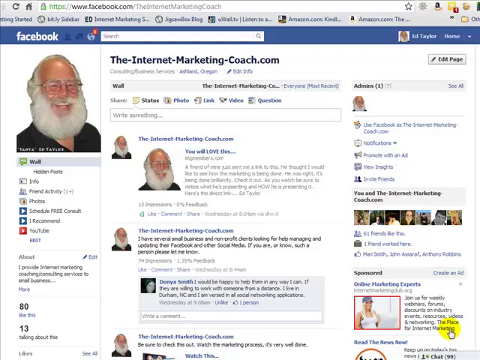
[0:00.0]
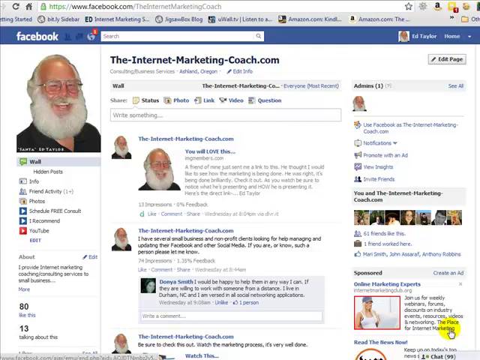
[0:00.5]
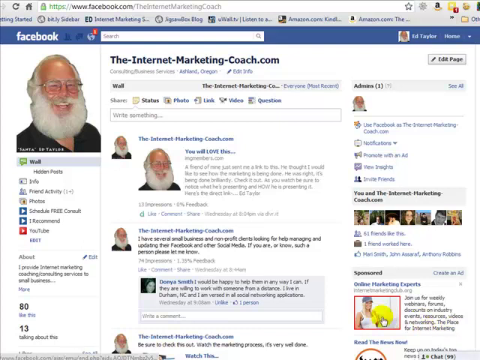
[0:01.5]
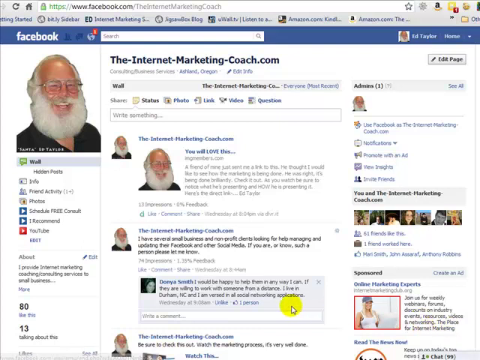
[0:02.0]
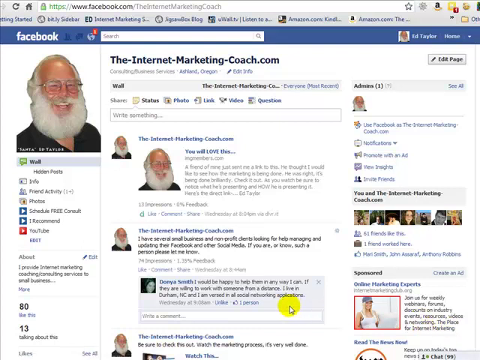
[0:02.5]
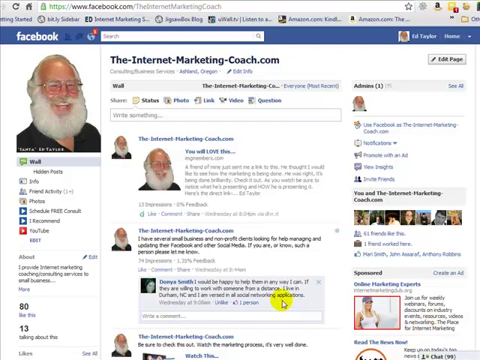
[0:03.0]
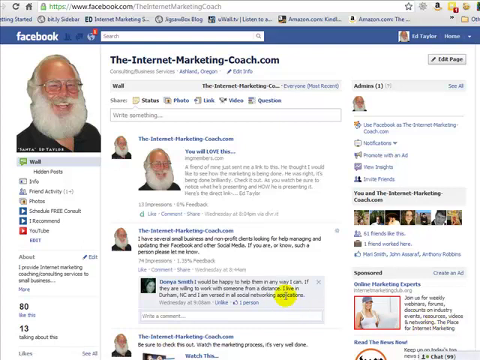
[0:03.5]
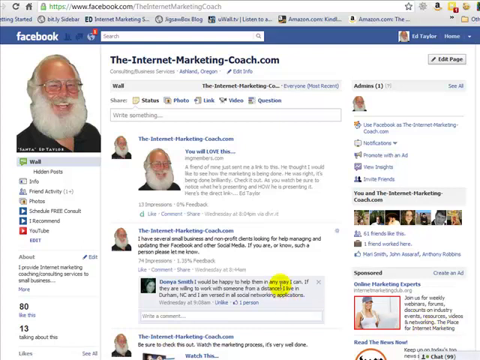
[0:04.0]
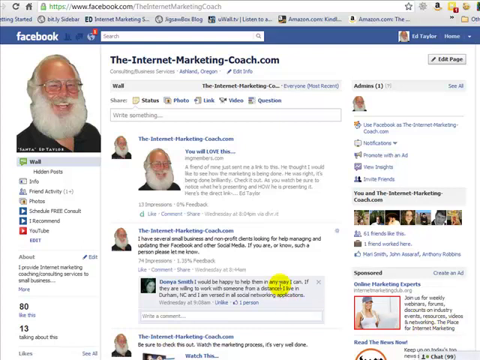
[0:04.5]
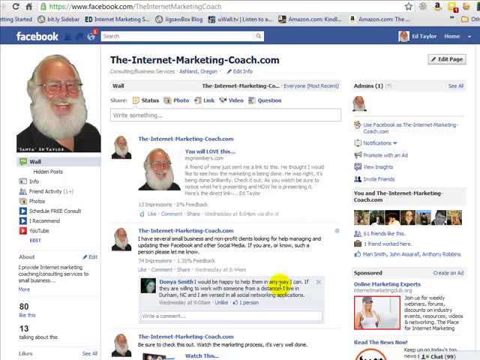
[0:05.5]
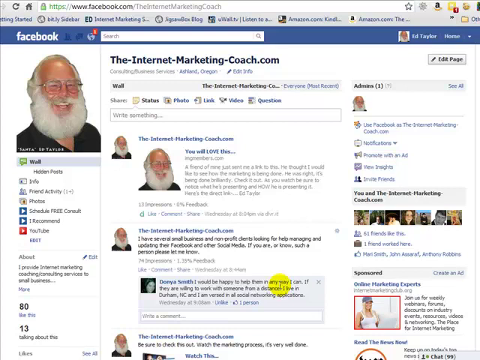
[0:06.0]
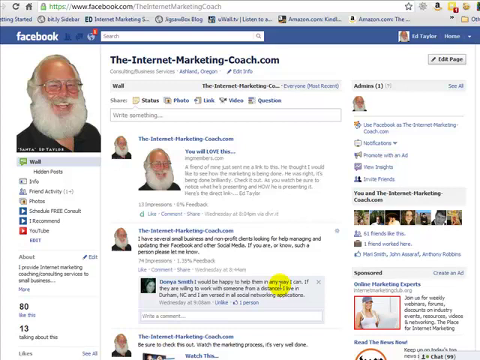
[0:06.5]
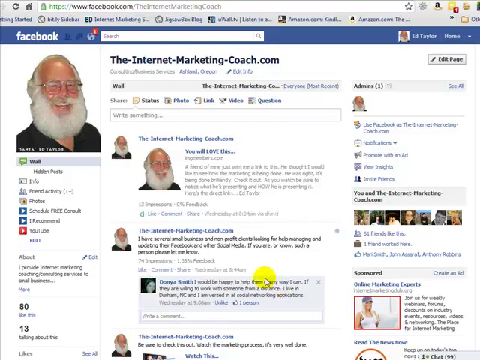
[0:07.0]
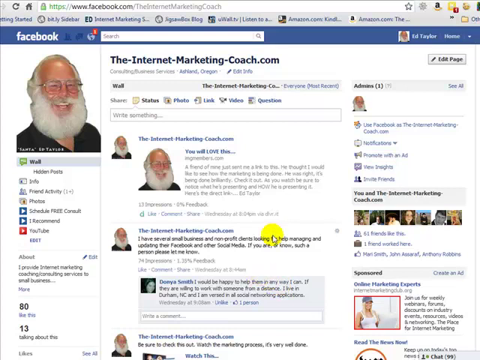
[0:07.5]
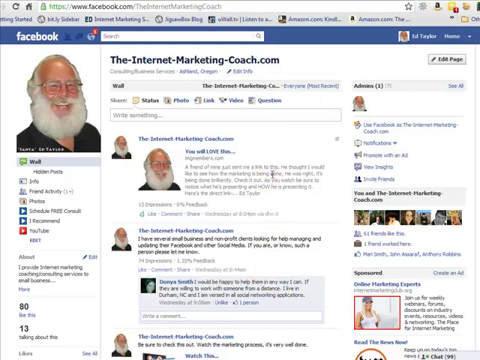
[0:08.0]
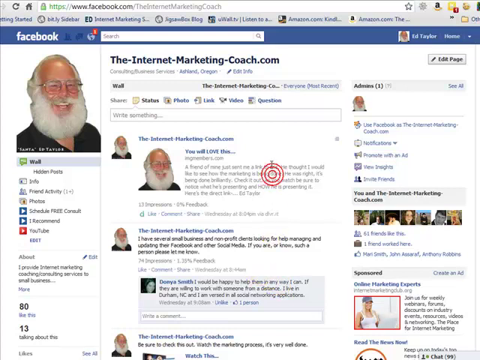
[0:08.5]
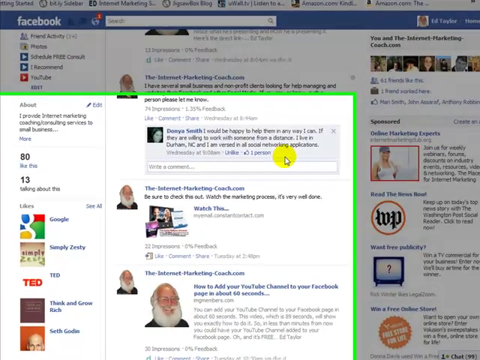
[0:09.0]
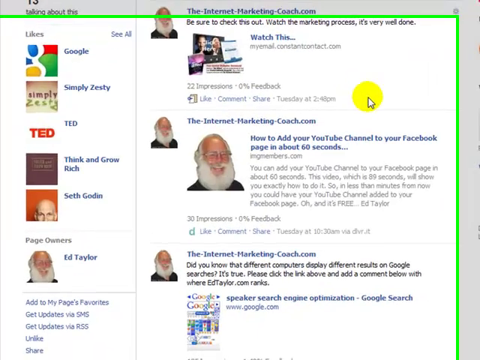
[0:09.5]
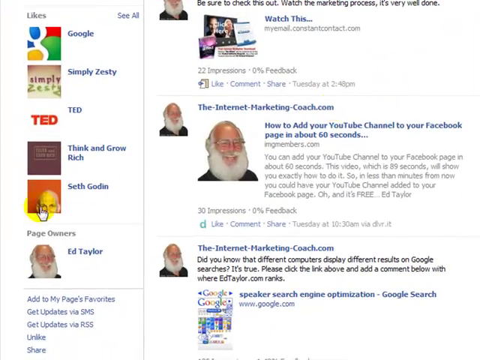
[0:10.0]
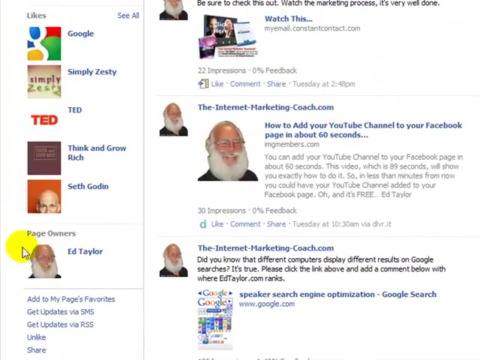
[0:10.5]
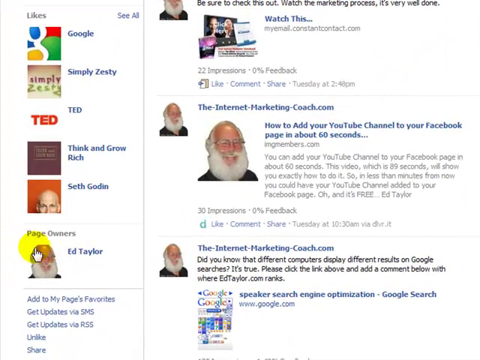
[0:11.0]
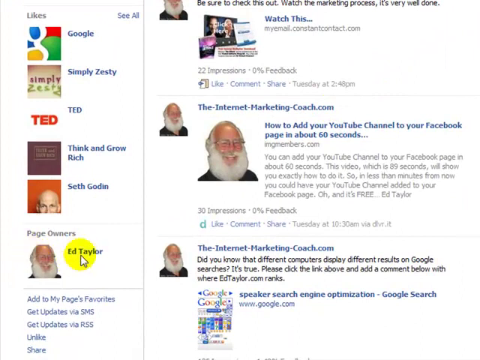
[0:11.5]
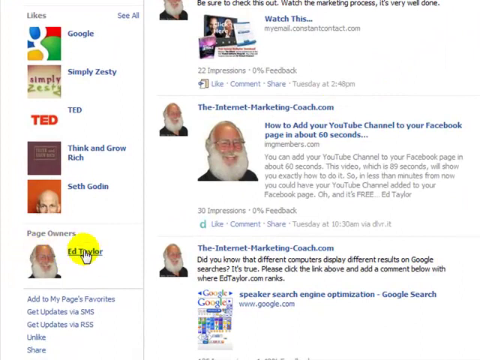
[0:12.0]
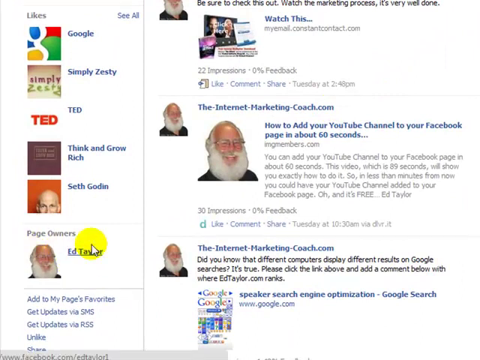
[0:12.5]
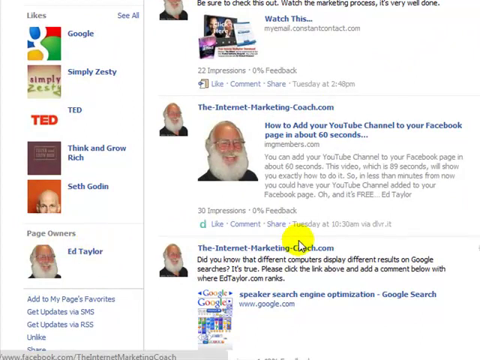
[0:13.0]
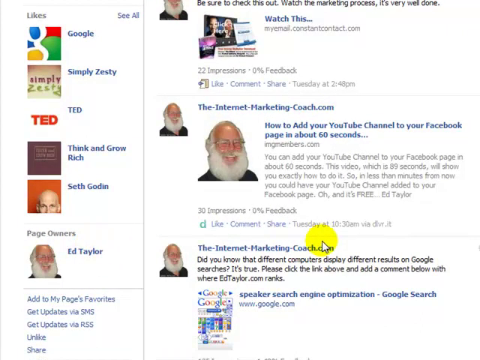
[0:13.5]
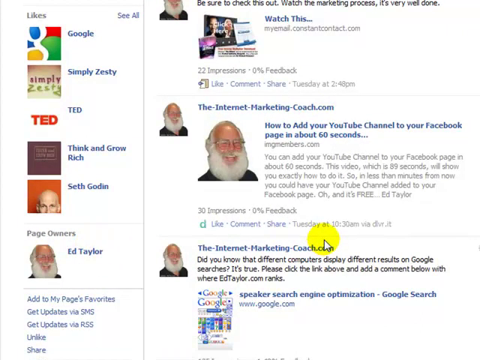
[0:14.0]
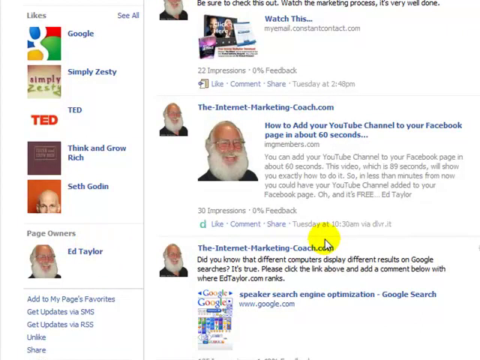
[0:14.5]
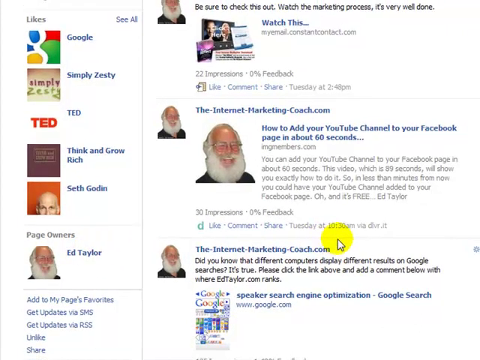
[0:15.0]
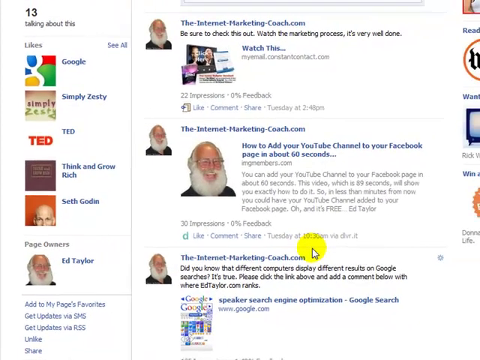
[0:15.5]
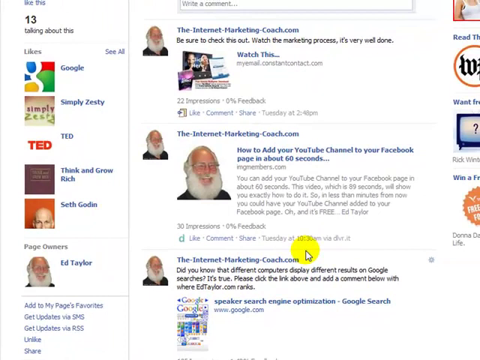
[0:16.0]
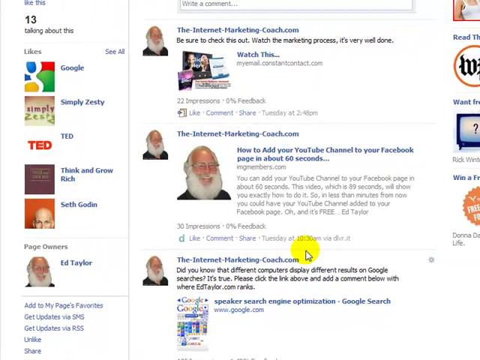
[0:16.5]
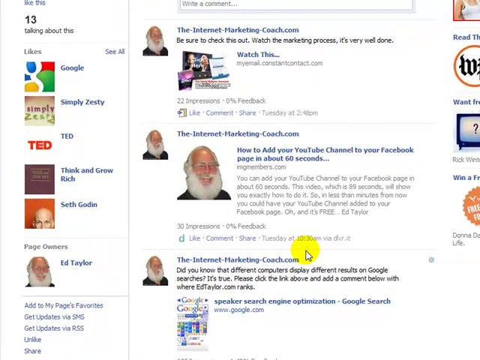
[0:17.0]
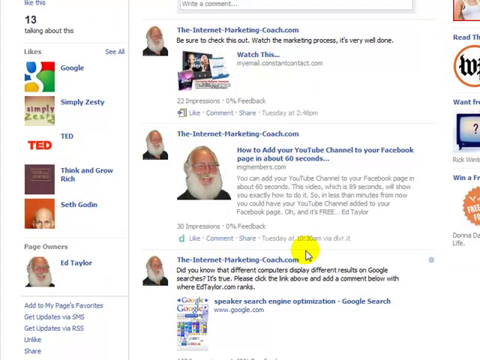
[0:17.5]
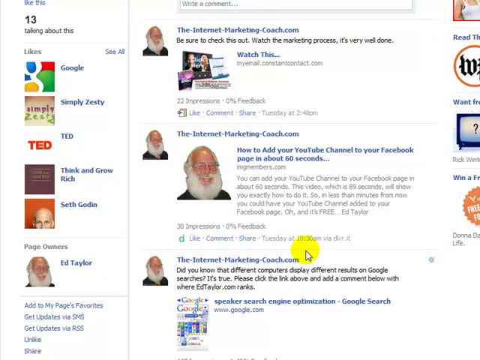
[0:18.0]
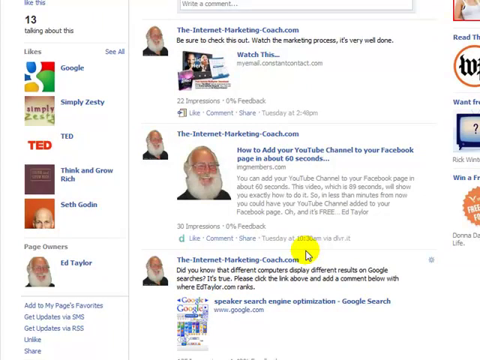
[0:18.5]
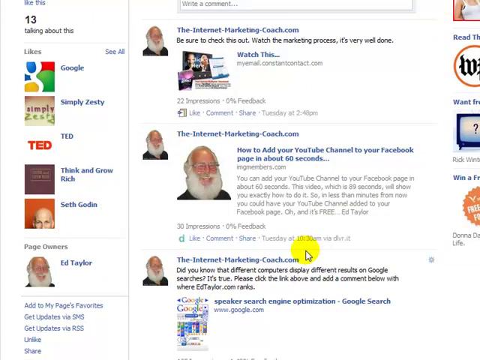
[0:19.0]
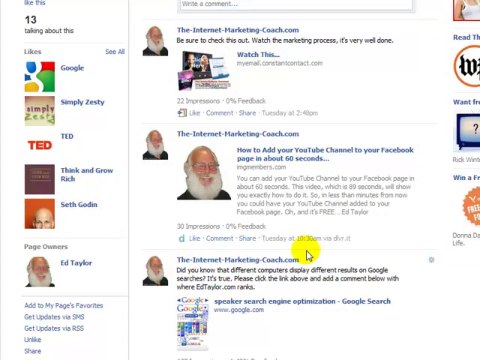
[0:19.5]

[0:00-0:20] A Facebook page called TheInternetMarketingCoach.com is shown. Its picture is of a man with a very bushy white beard who wears glasses, smiles, and has on a black shirt. Judging by the page layout, it appears to be an older version of Facebook rather than a current page. There is a search bar at the very top, a world icon with the number one in it, and an edit page button at the top right. Various posts from the man appear, and on the left-hand side there is a list of different items. A cursor with a yellow circle moves over to one of the comments and then appears to highlight the man's face on the left where it says "Ed Taylor." The page kind of moves around a bit.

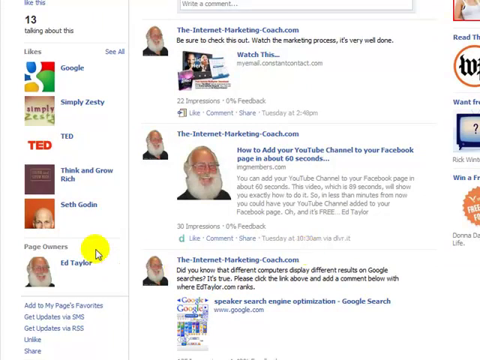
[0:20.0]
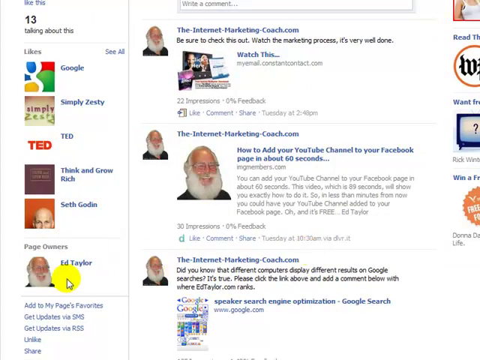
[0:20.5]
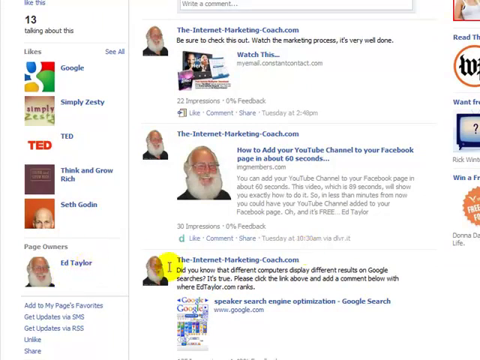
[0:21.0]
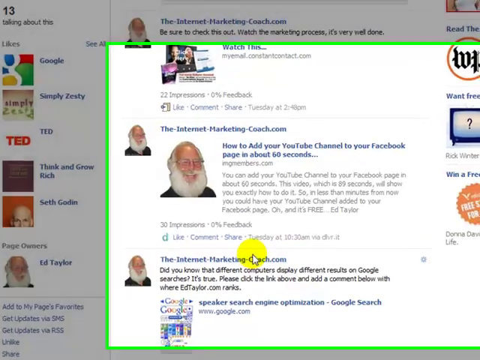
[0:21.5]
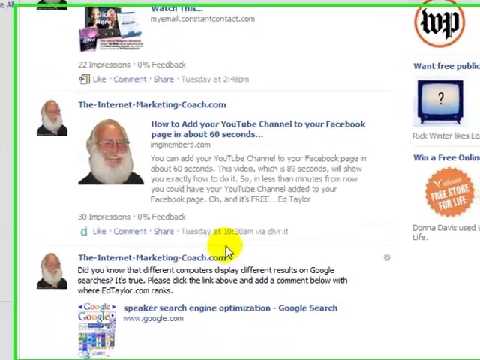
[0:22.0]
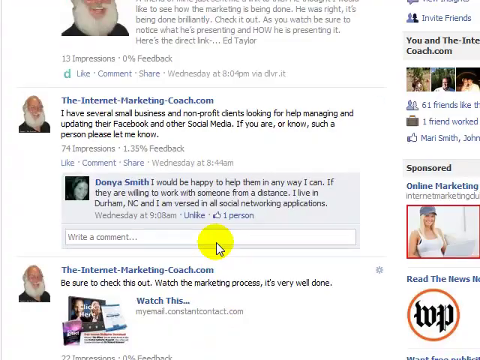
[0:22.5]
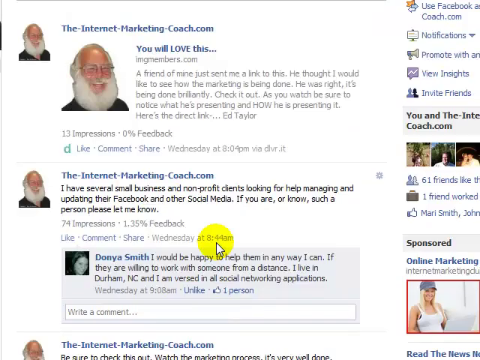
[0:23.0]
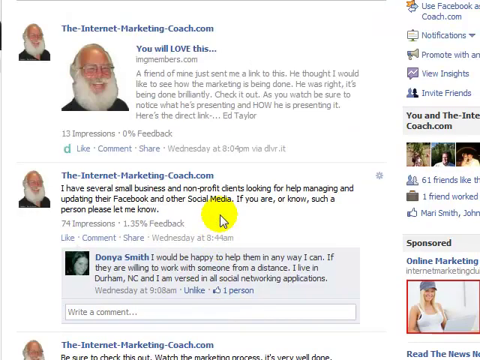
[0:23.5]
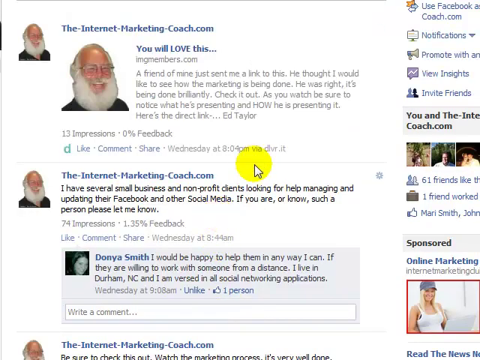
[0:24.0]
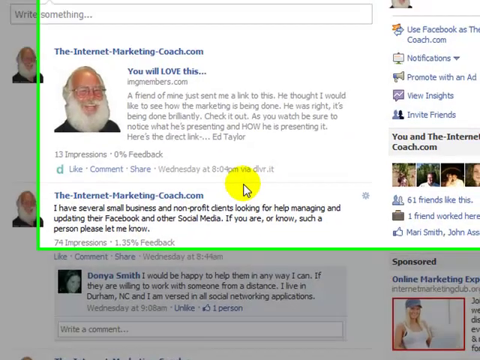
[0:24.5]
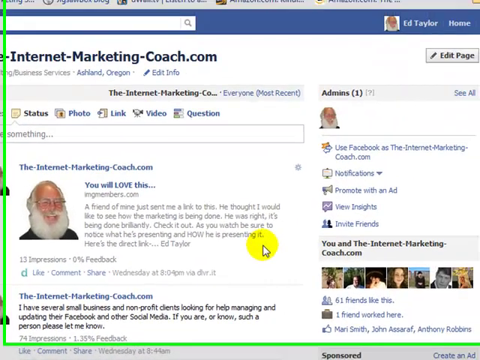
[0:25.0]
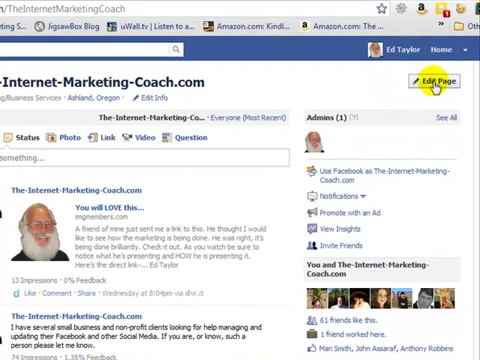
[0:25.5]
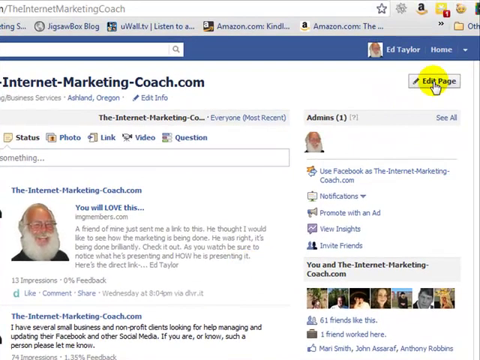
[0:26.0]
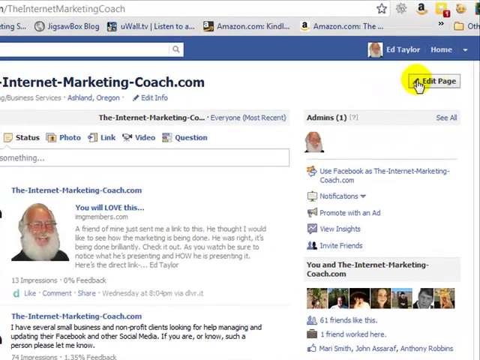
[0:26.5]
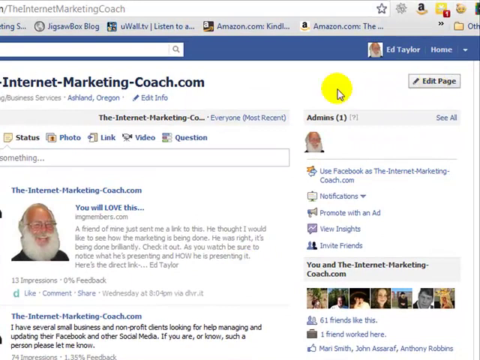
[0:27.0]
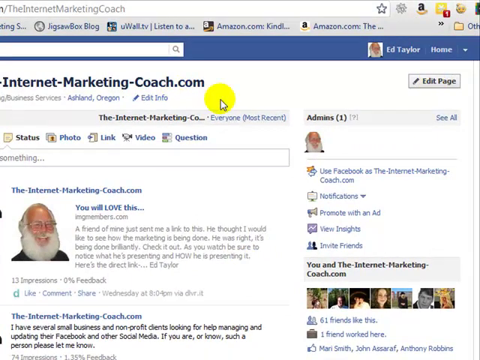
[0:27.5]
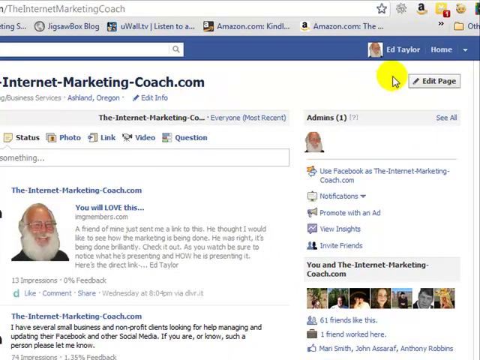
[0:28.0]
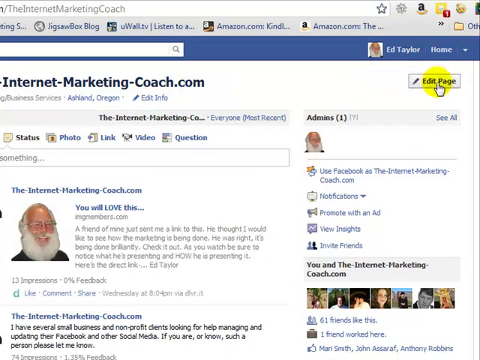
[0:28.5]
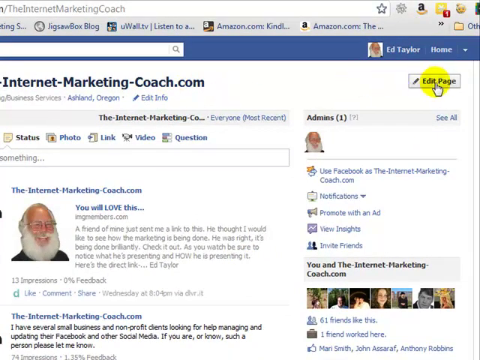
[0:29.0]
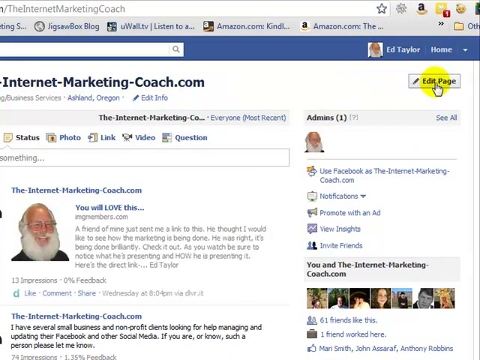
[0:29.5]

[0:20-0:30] The man's Facebook page is shown; on the left-hand side it says "13 talking about this." Several likes are listed on the left: Google, Simply Zesty, Ted, Think and Grow Rich, and Seth Godin. The page is an older version of Facebook, not a current one. The yellow cursor moves around, then goes up to the edit page button and clicks it. Everything shown is on this one page; it does not go to a different page.